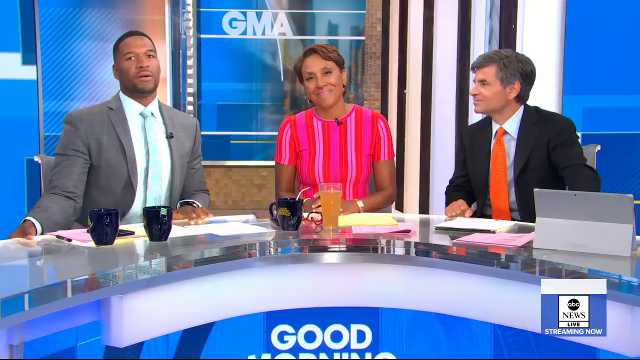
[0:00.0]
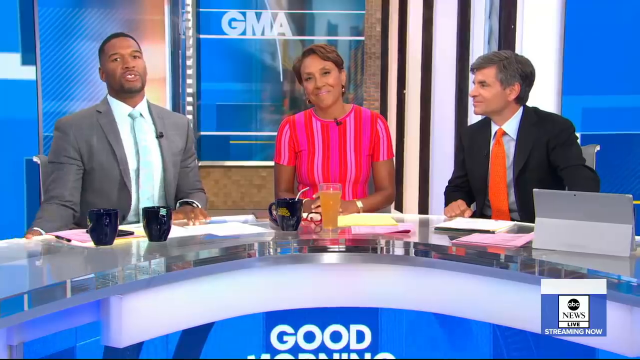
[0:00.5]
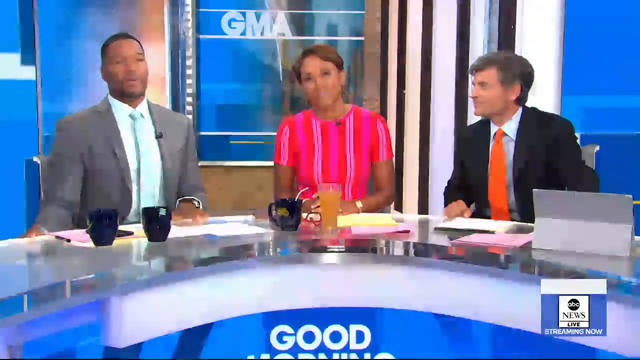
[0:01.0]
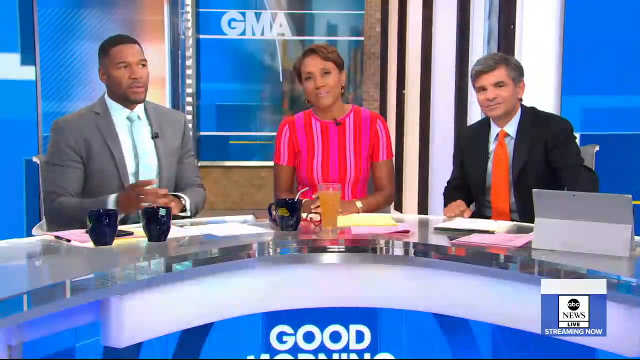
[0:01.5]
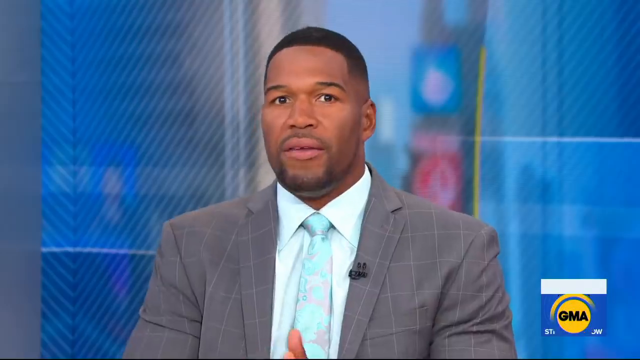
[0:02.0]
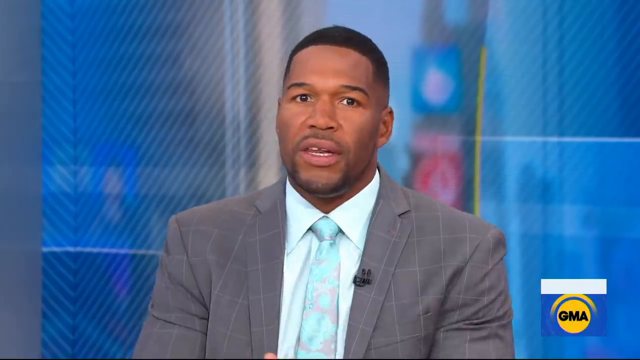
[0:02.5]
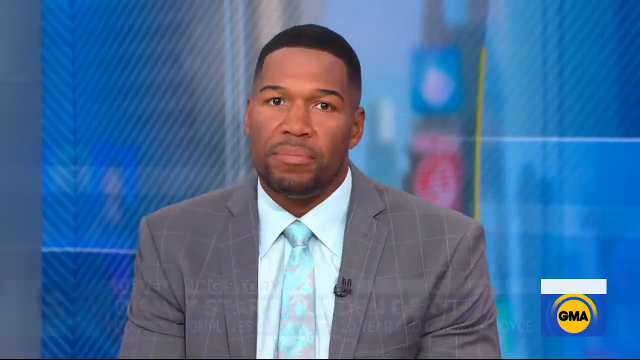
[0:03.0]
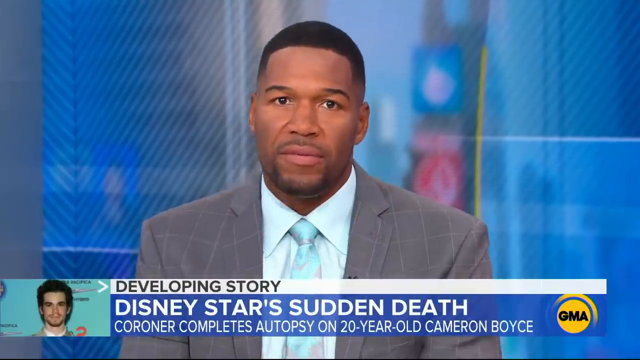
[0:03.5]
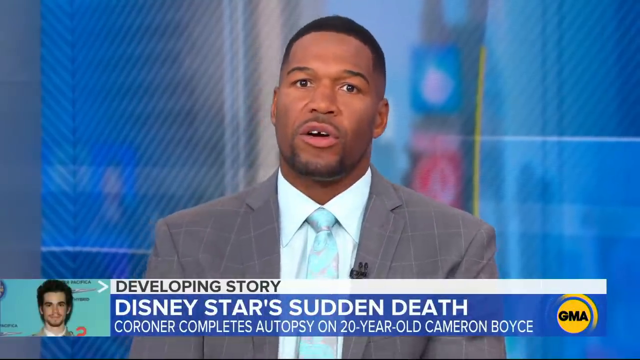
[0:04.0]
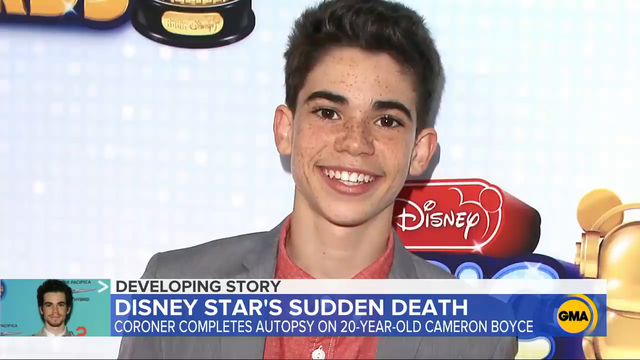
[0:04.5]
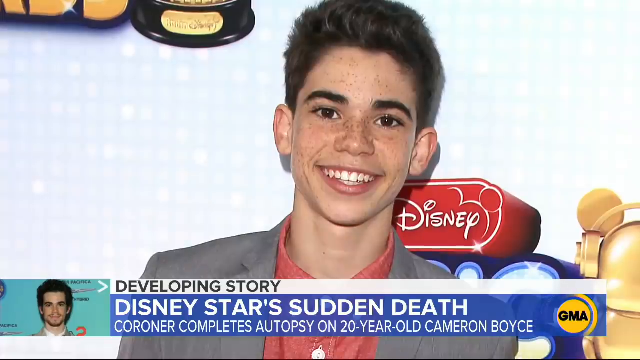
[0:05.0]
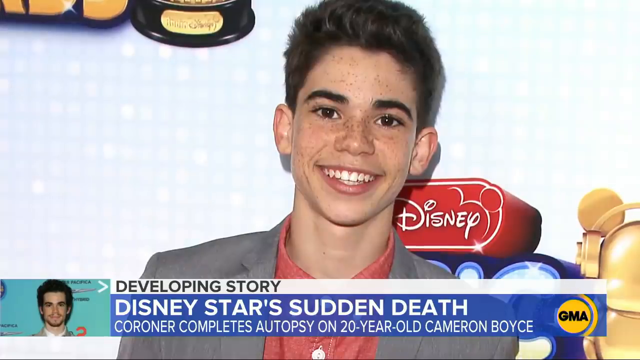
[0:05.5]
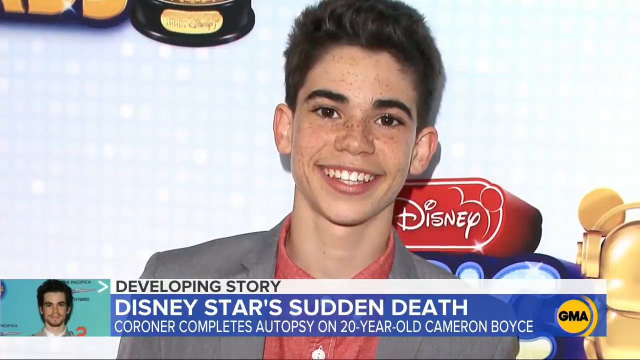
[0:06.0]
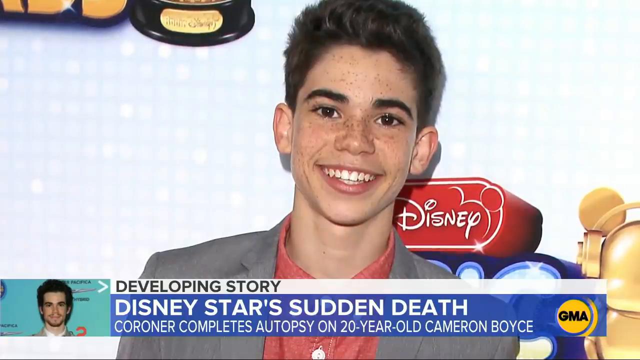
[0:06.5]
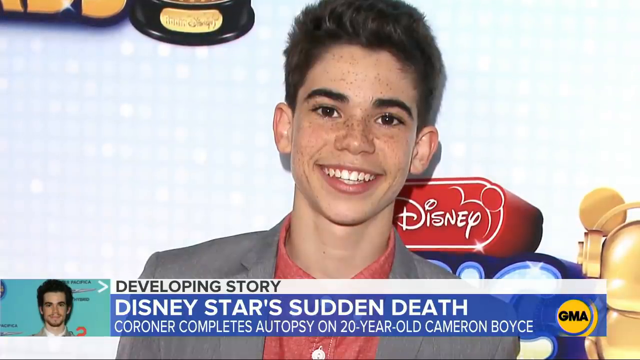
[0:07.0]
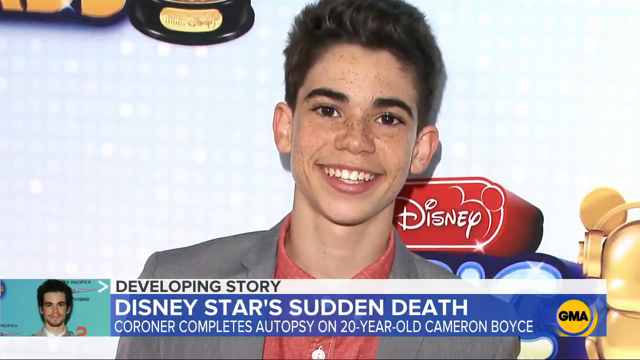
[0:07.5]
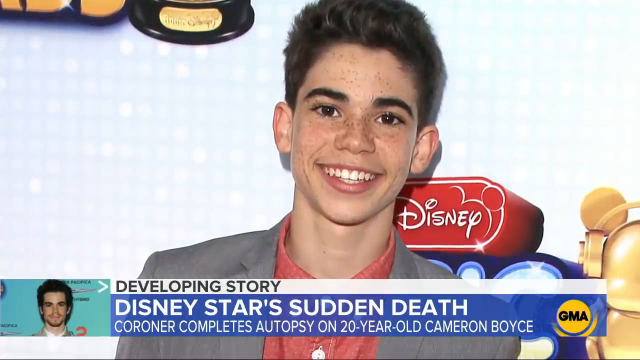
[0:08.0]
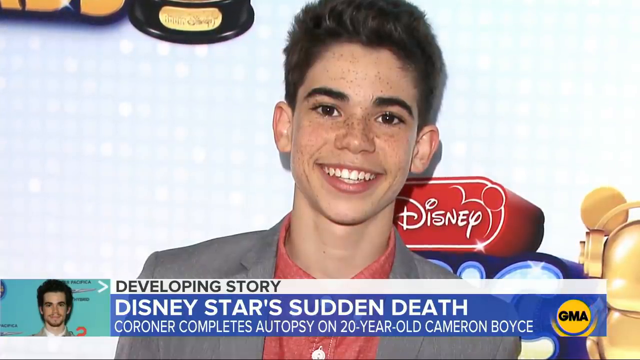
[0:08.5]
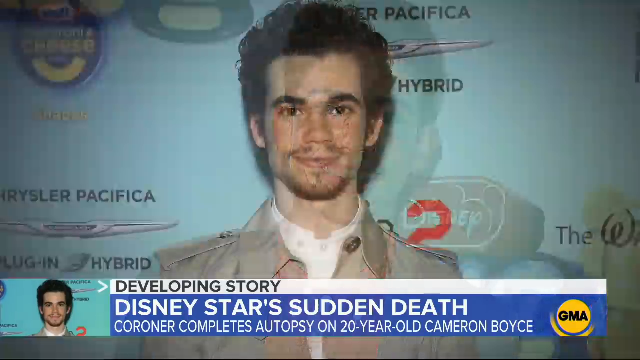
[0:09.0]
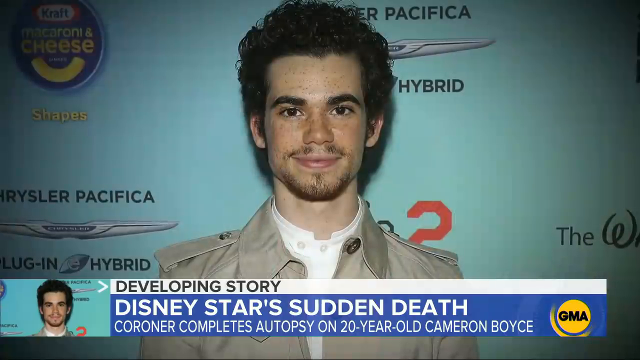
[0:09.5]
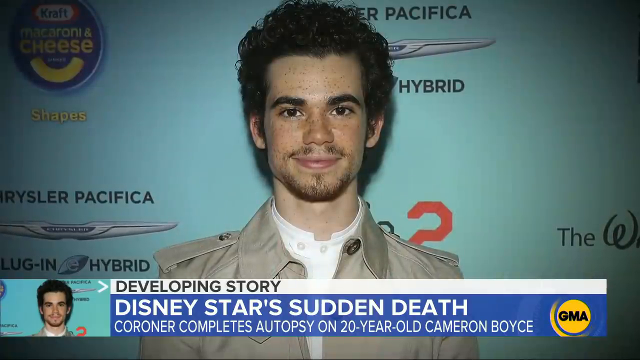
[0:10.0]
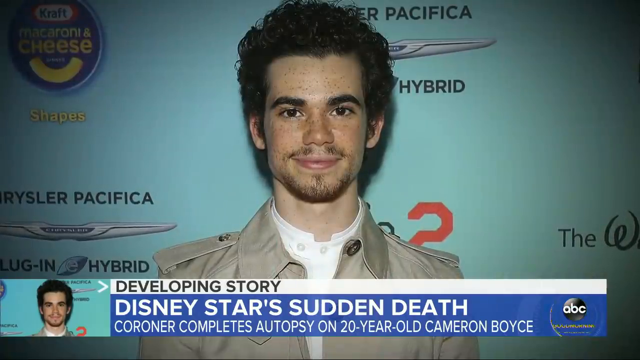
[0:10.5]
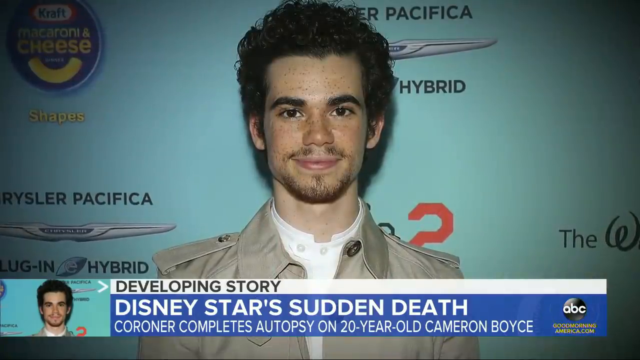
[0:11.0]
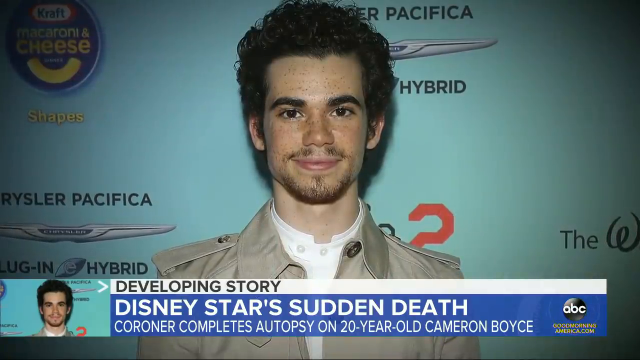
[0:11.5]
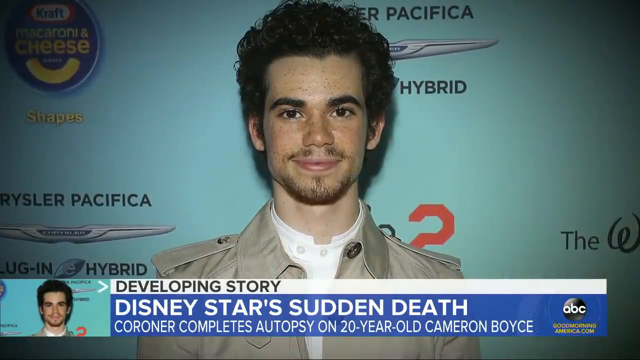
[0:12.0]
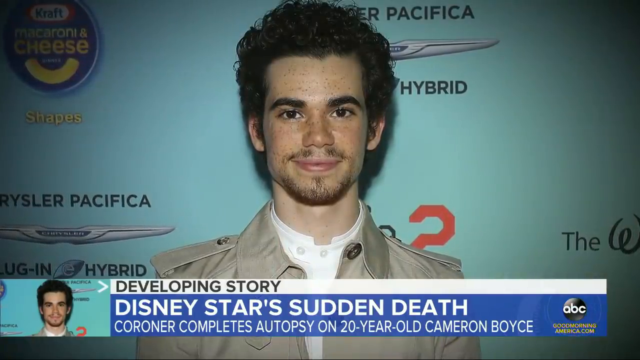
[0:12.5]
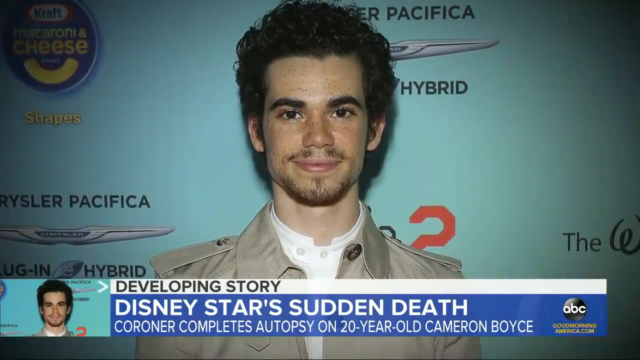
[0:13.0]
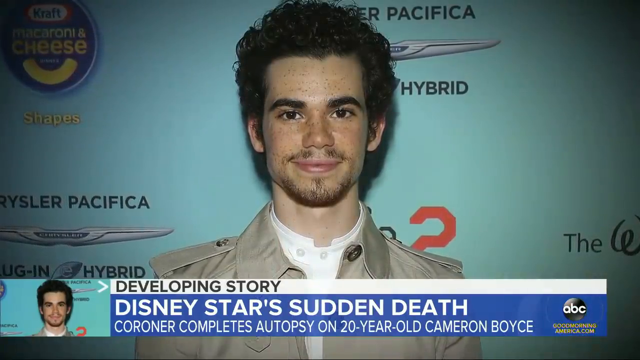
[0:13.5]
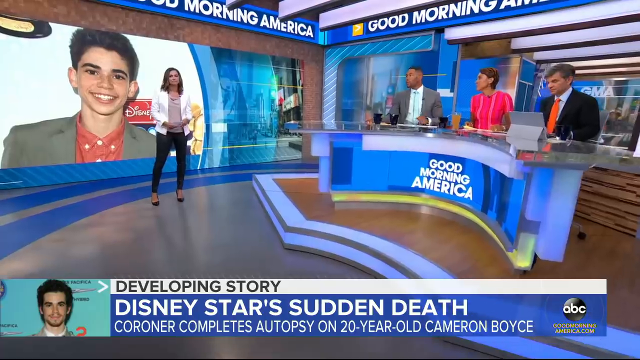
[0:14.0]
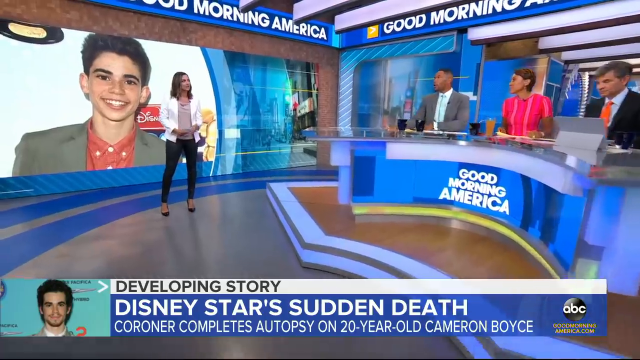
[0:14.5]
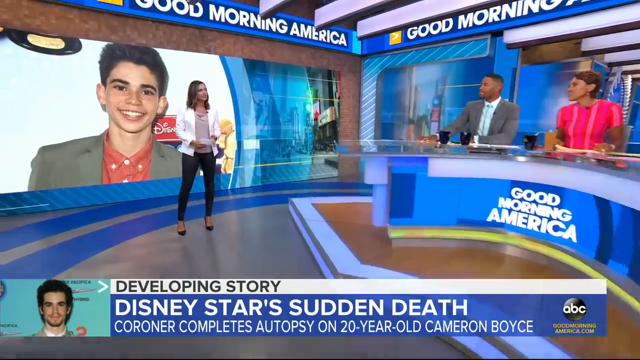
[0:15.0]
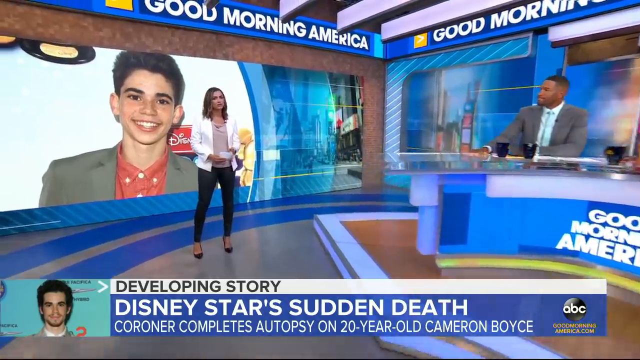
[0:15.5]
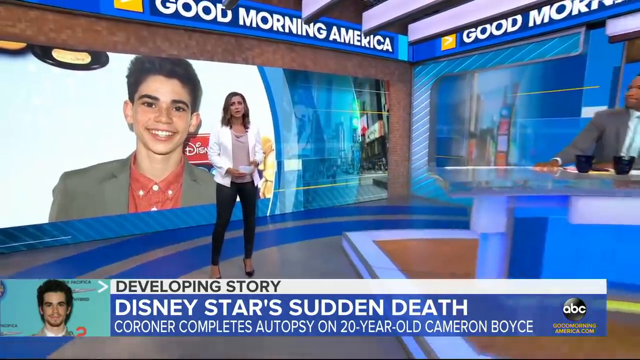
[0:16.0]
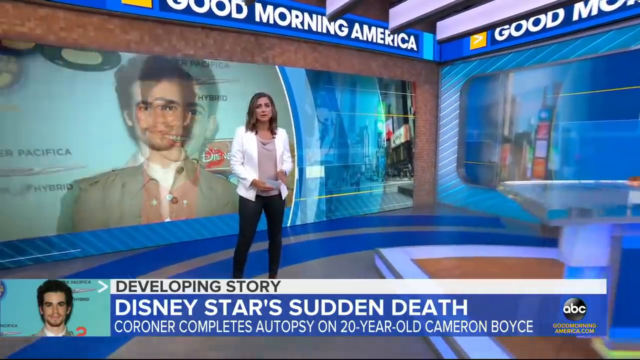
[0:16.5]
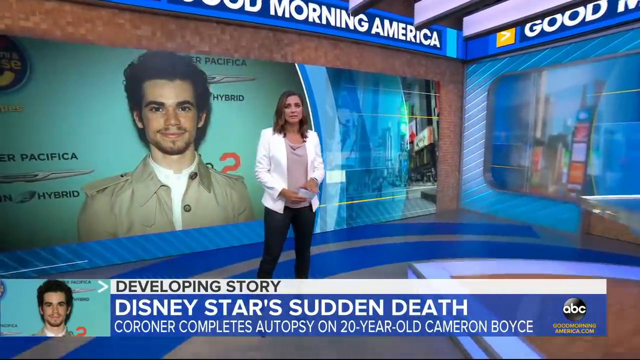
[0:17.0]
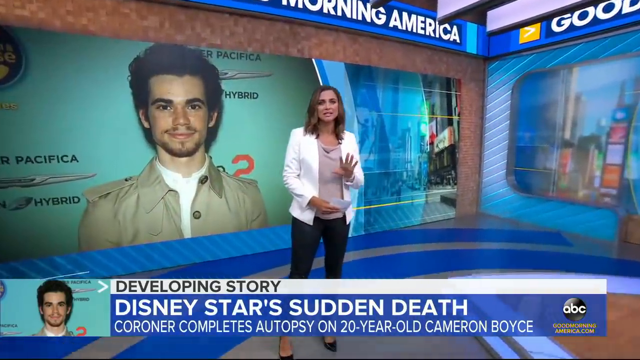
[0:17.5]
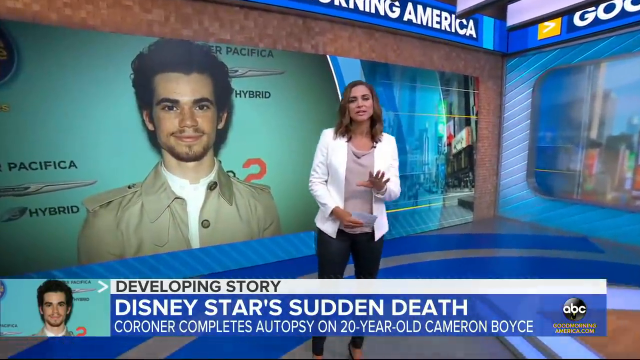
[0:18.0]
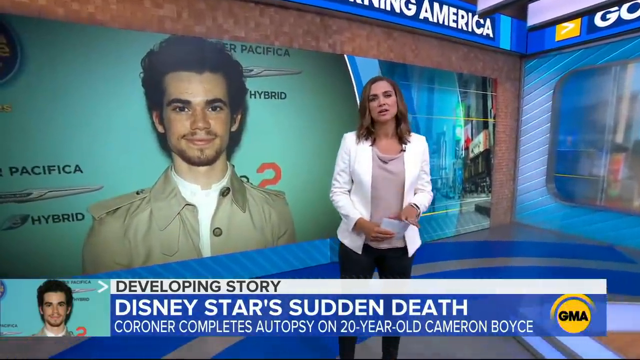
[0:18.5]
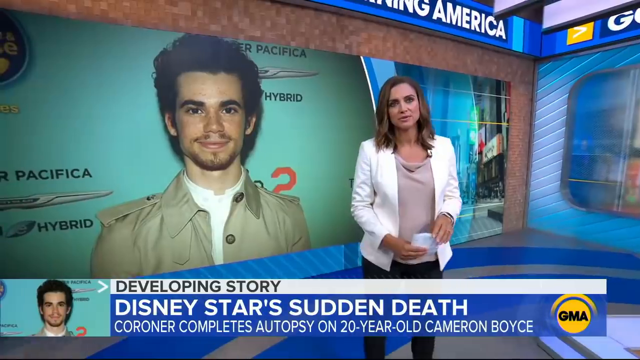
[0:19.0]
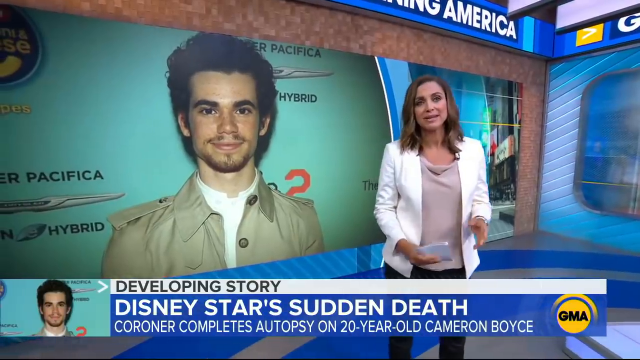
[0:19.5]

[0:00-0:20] Three people sit at a news desk facing the camera, with blue, futuristic-looking walls behind them serving as the news channel's backdrop. On the left is a man with short dark hair and some facial hair, wearing a gray blazer, a white-bluish undershirt and a light blue tie. The woman in the middle wears a bright red and hot pink short-sleeve top and has short, dark brown hair. The man on the right wears a black blazer, a white-bluish undershirt and an orange tie, and has gray, dark, short hair. Mugs, cups and some paper are on the table in front of them, and the man on the right has a Microsoft Surface laptop in front of him. The man on the left begins speaking toward the camera while the others listen and stare at the camera. The view then changes to focus only on the man in the gray blazer; up close, the blazer is mostly dark gray with some gray lines on it. A banner appears at the bottom of the screen reading "story", with the main title "Disney stars sudden death" and the subtitle "coroner completes autopsy on 20 year old Cameron Boyce". On the left of the banner is a photo of a man, presumably Cameron Boyce, and on the right of the title is the GMA logo. After a few seconds the presenter is replaced by a photo of Cameron Boyce smiling, standing in front of a Disney backdrop and wearing a gray blazer. Another photo follows in which he stands in front of a different Disney backdrop with different brands on it; he has slightly longer hair, some facial hair and a trench coat. The view returns to the Good Morning America desk, then pans over to a woman on the left side standing in front of a big screen. She wears a white blazer, black pants, black heels and a light pink or gray boatneck top, and has long, dark brown hair that rests at her shoulders. The screen behind her changes to show photos of Cameron Boyce as she speaks to the camera, gesturing with her hands while holding a paper.